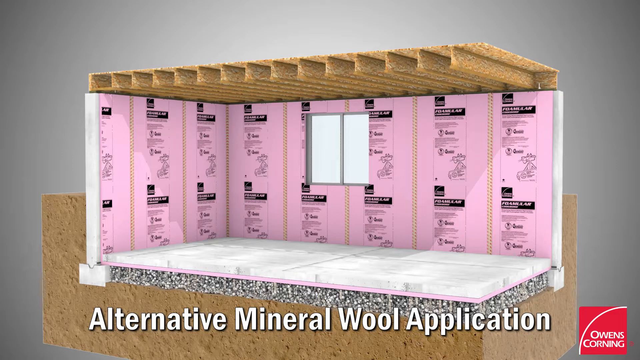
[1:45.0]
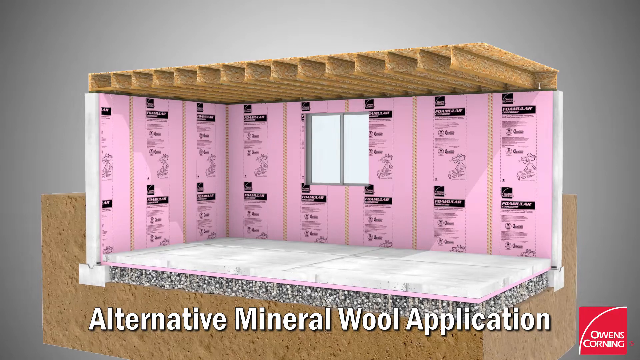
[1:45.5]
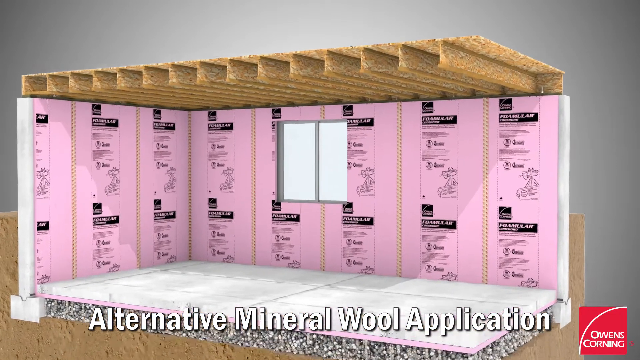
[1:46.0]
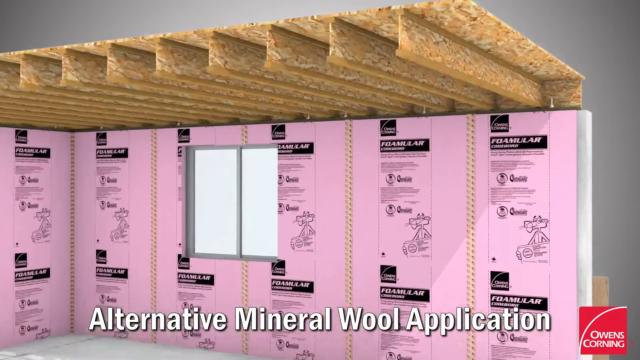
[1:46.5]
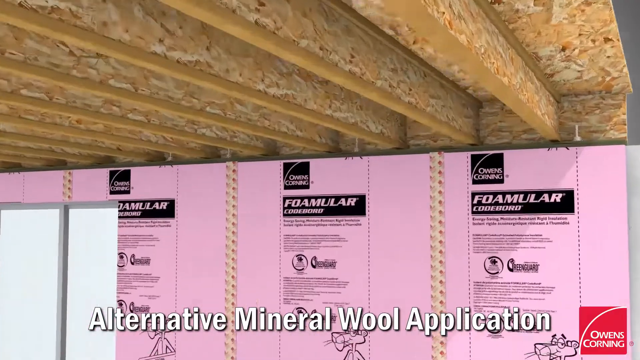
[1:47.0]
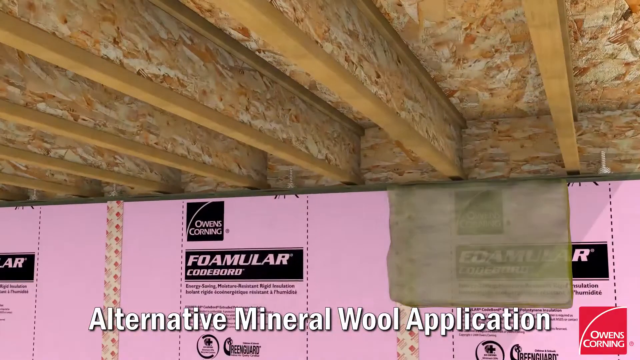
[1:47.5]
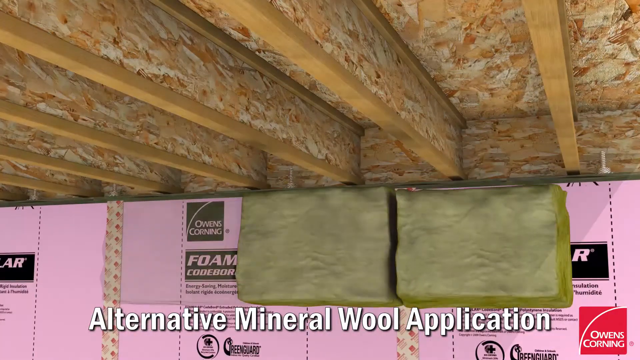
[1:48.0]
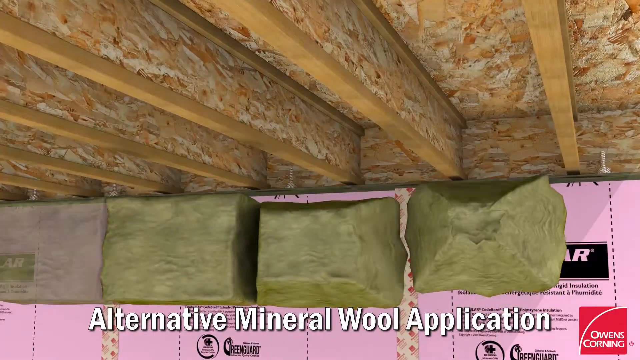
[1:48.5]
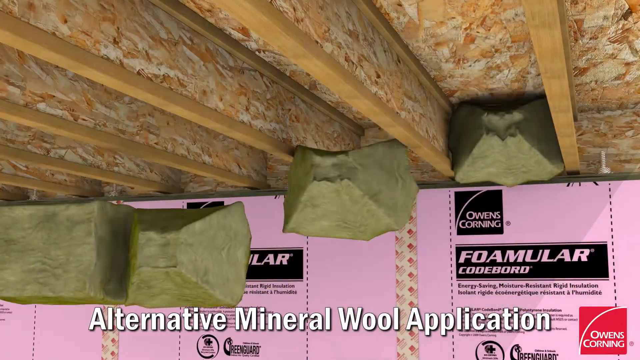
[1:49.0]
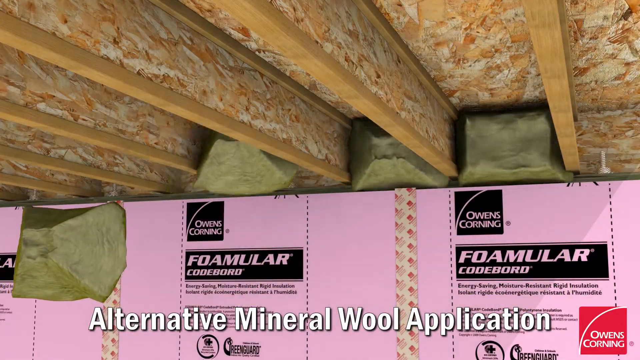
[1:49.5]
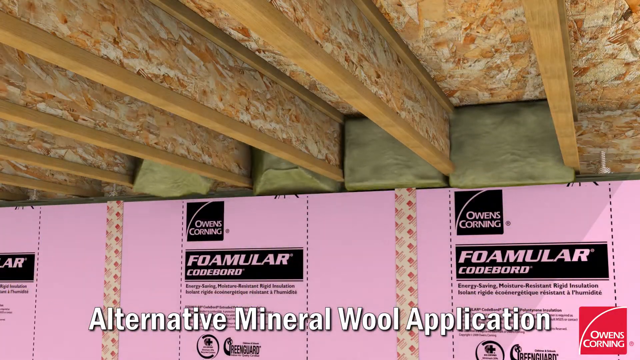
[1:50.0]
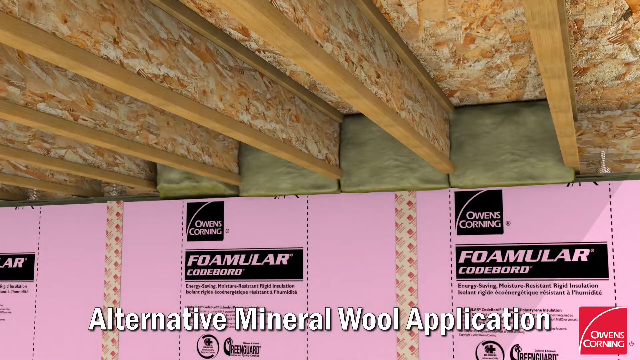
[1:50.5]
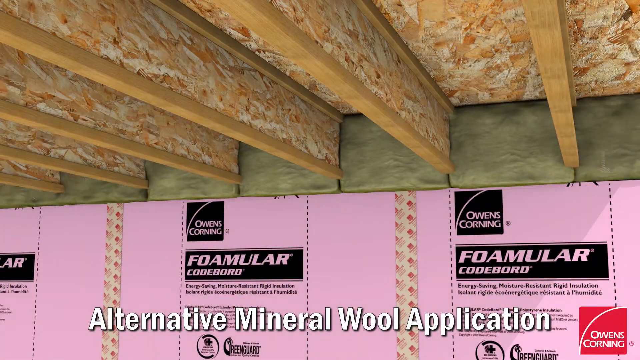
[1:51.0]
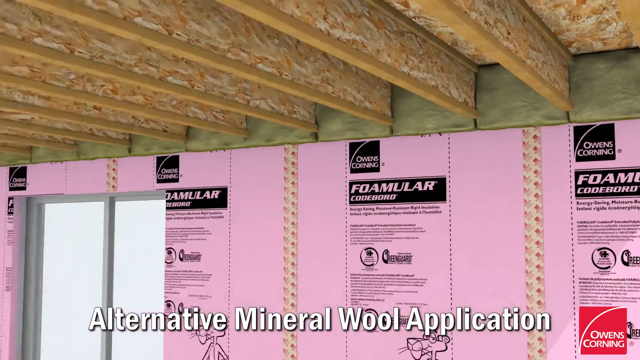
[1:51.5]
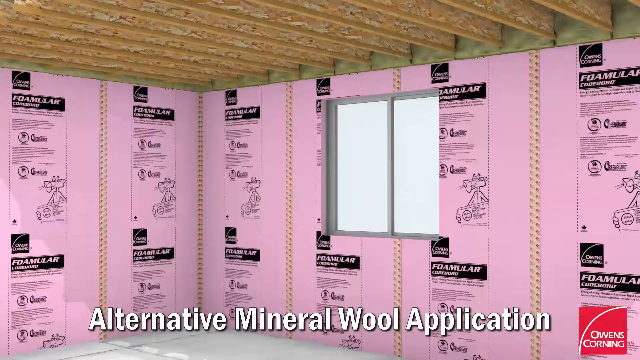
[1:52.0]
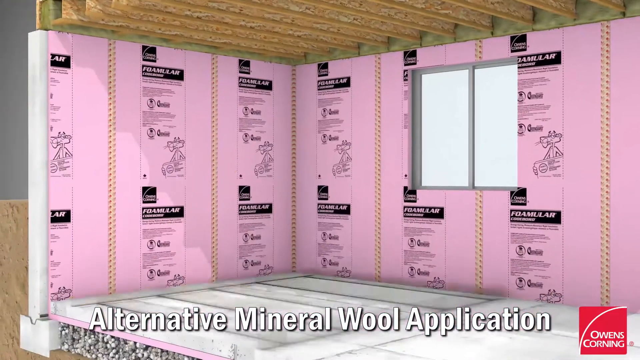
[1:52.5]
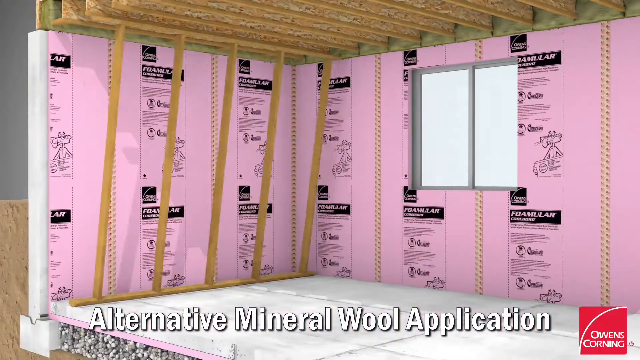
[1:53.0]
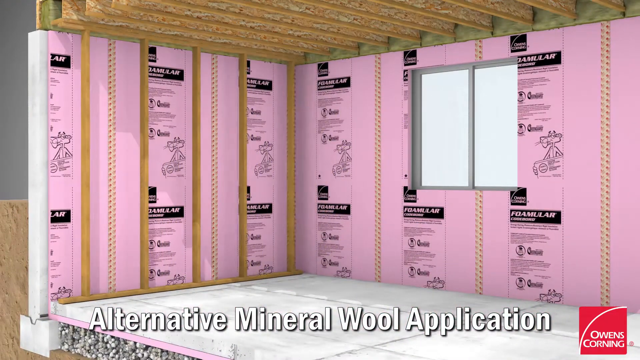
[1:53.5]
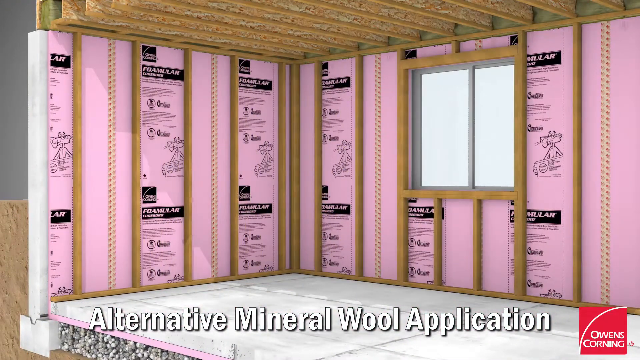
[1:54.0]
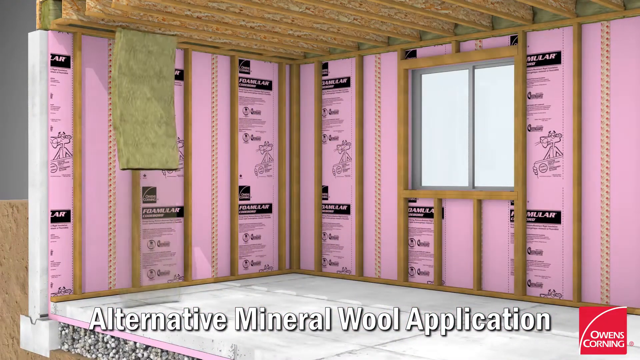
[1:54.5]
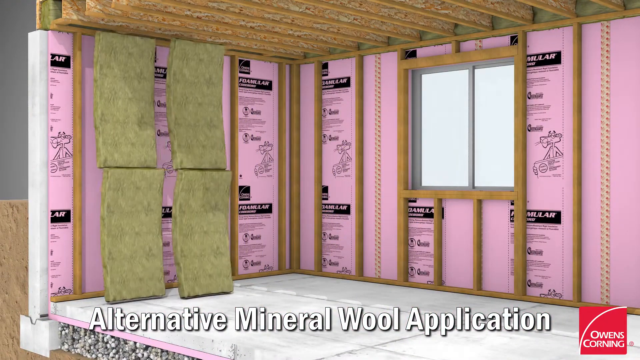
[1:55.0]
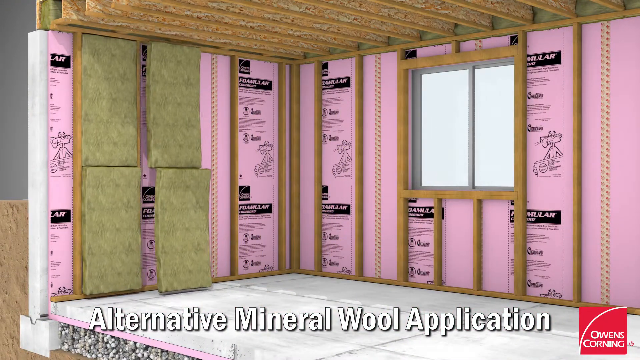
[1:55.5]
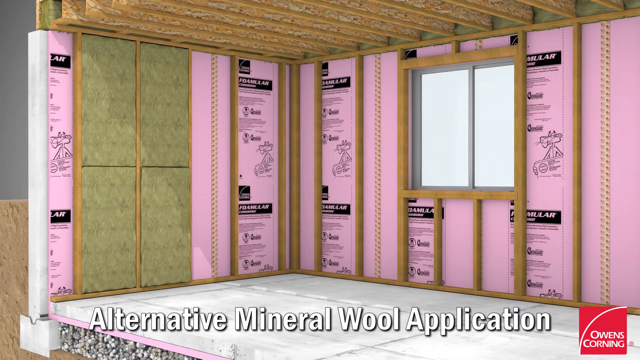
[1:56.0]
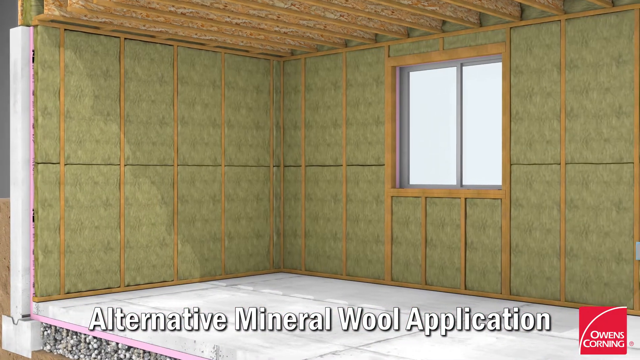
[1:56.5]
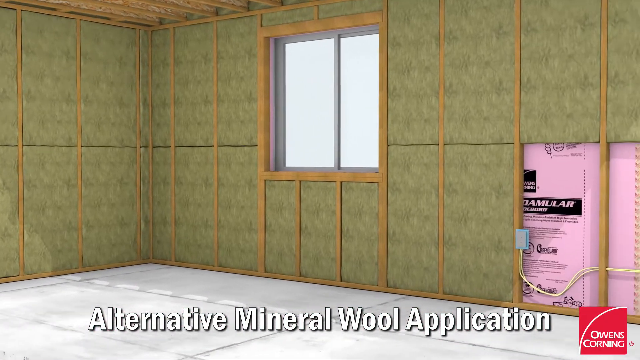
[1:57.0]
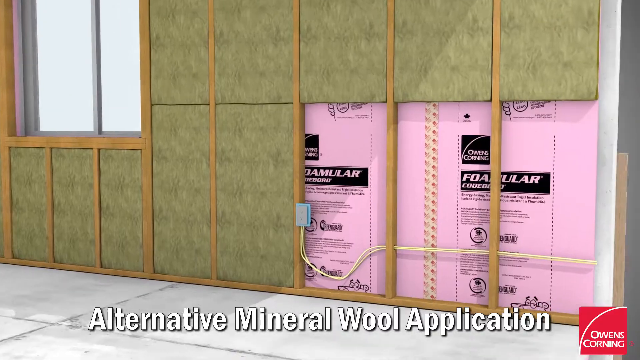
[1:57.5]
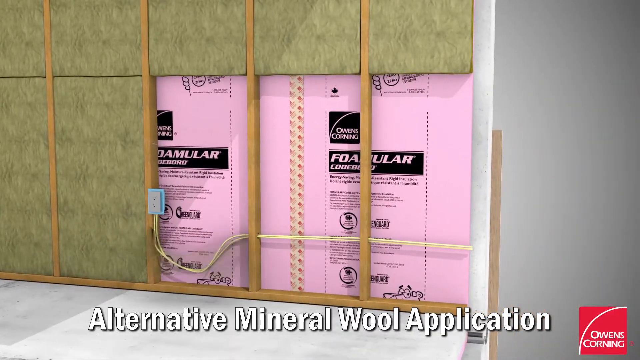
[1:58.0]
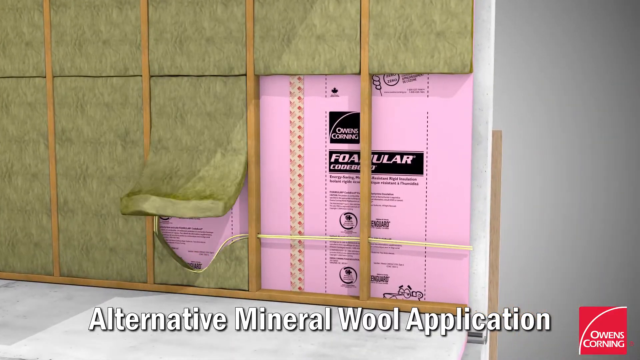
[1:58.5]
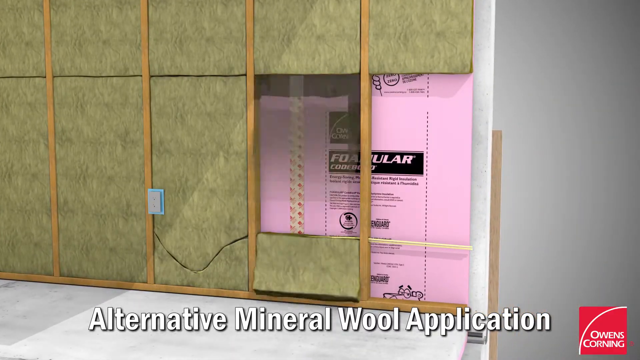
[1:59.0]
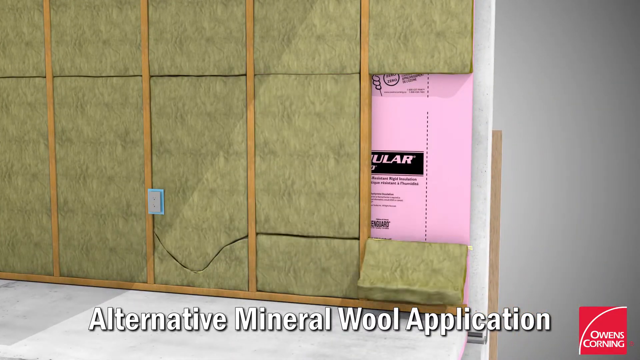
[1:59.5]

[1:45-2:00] A 3D rendering of a room with framing appears, with "alternative mineral wool application" in white at the bottom. A material that looks sort of like Silly Putty is packed into the joists of the walls and ceiling, apparently some sort of moisture barrier. A piece of clear plastic unrolls itself and sort of fills in, covering the material in the framing, and a nail gun nails it. A side-by-side follows, and the view zooms out to show "fiberglass application" on the left and "alternative mineral wool application" on the right: the same building with two different materials. The Owens Corning Building Solutions logo appears. The plastic membrane is also laid down after the material is stuffed into the wall beams and ceiling joists.